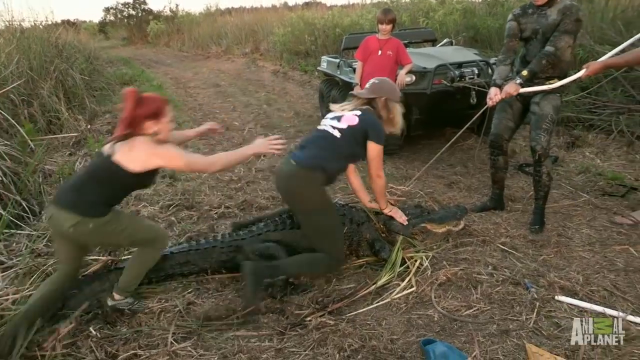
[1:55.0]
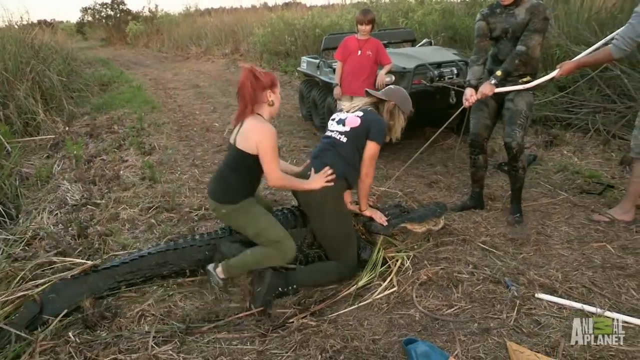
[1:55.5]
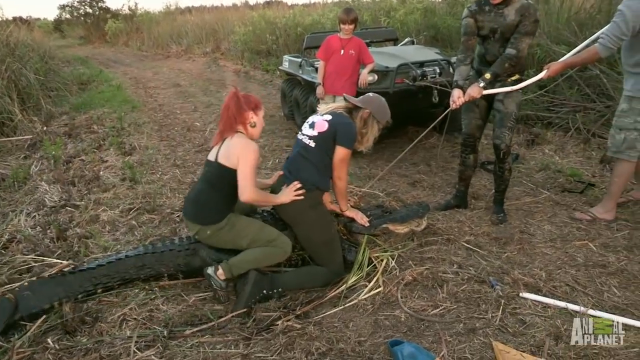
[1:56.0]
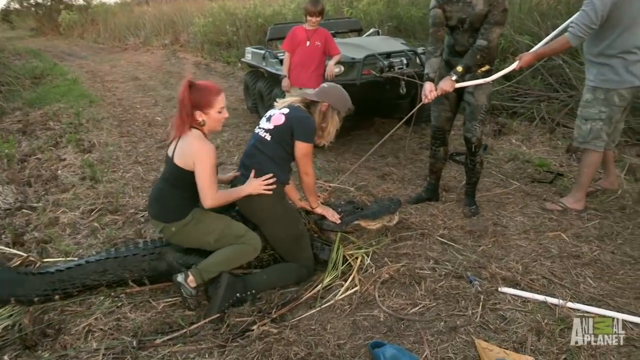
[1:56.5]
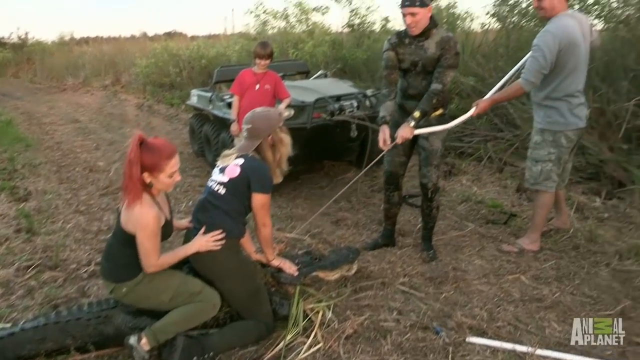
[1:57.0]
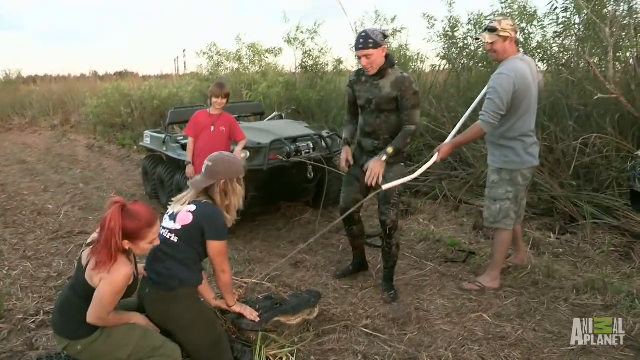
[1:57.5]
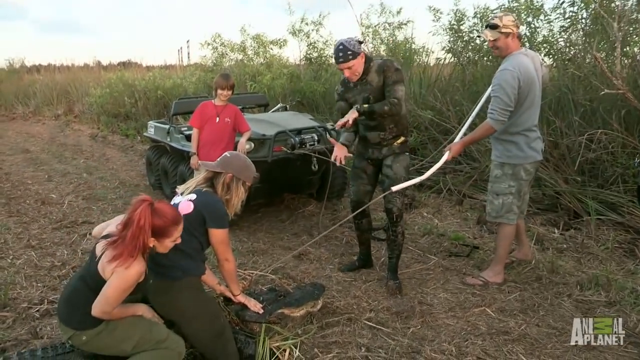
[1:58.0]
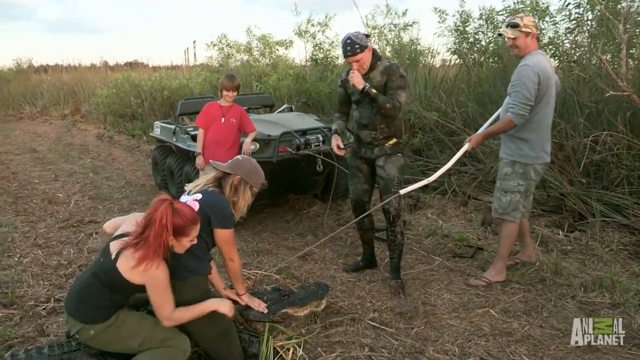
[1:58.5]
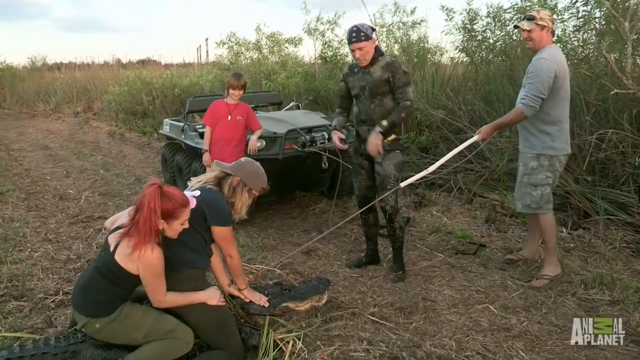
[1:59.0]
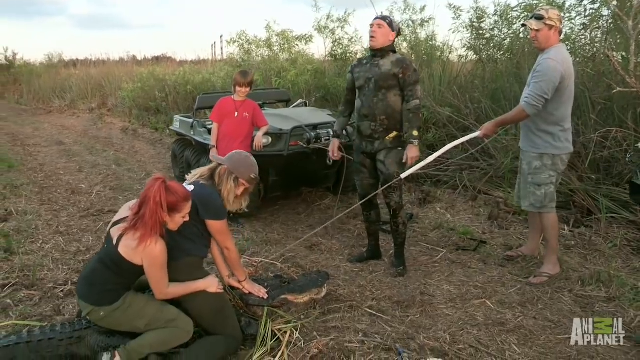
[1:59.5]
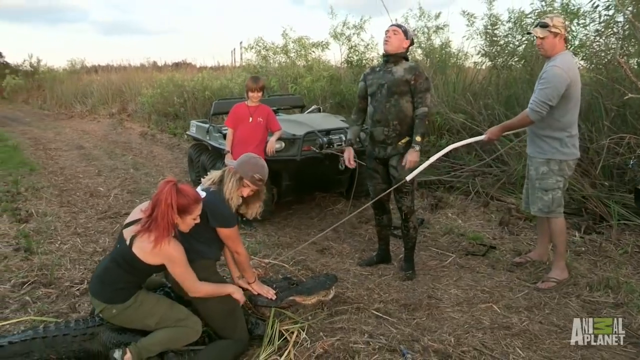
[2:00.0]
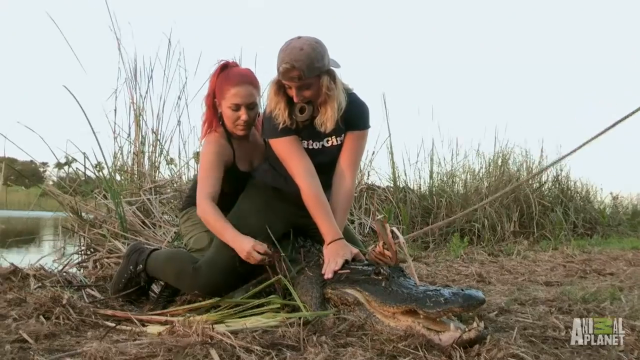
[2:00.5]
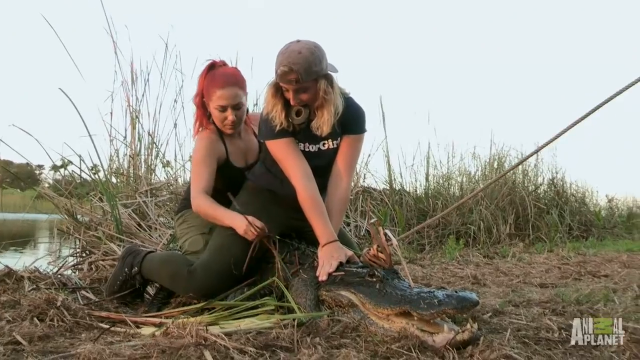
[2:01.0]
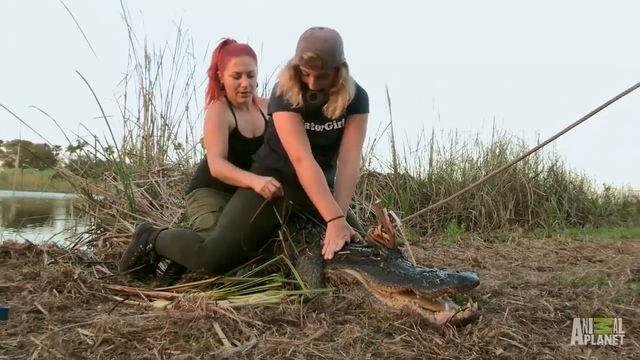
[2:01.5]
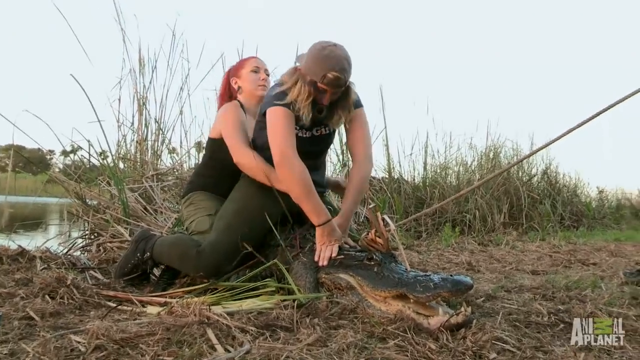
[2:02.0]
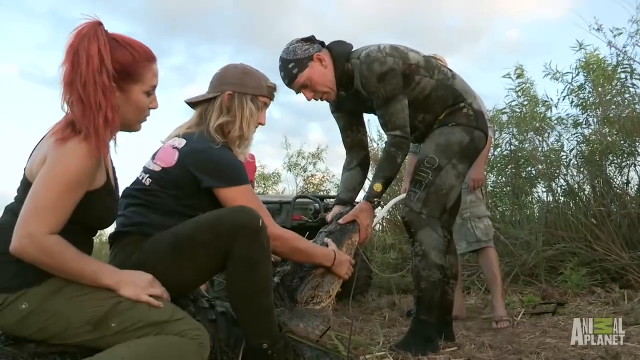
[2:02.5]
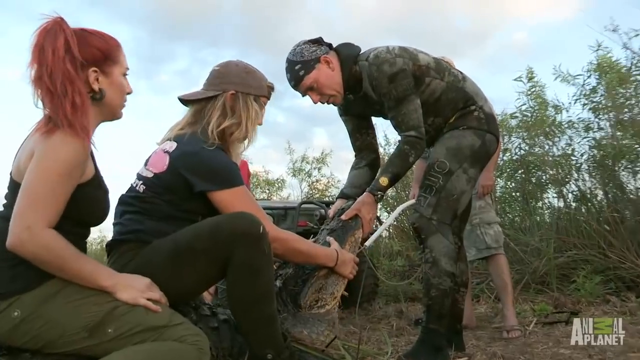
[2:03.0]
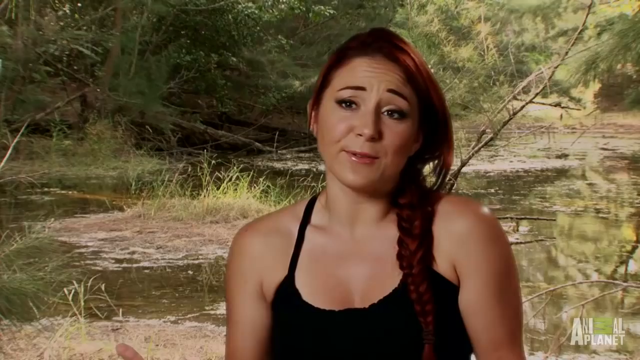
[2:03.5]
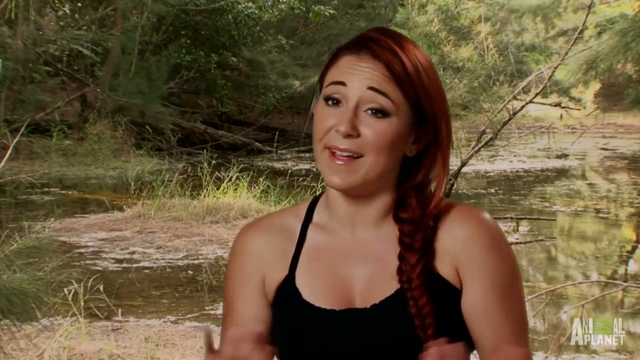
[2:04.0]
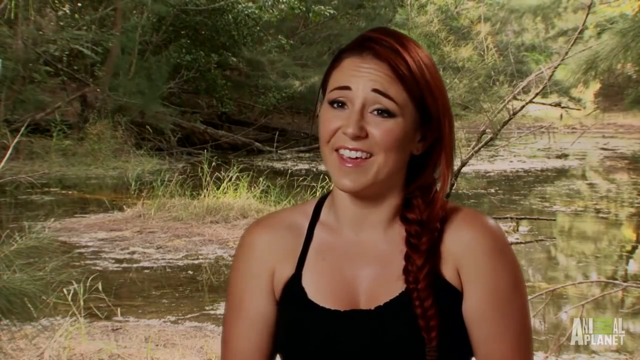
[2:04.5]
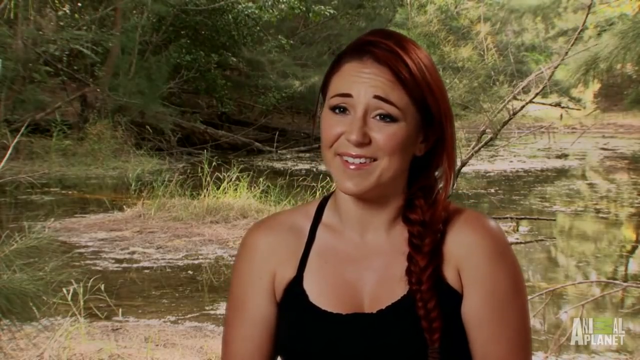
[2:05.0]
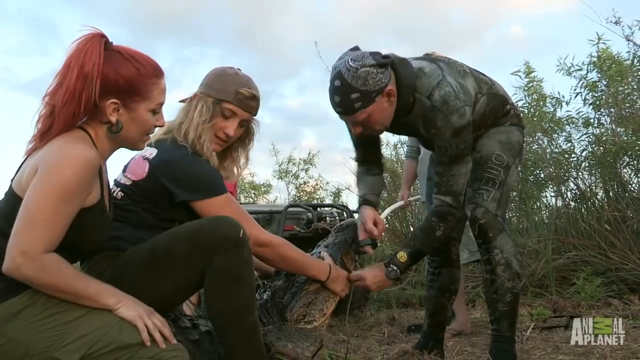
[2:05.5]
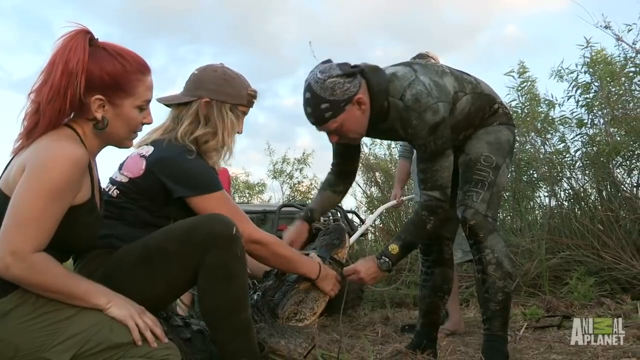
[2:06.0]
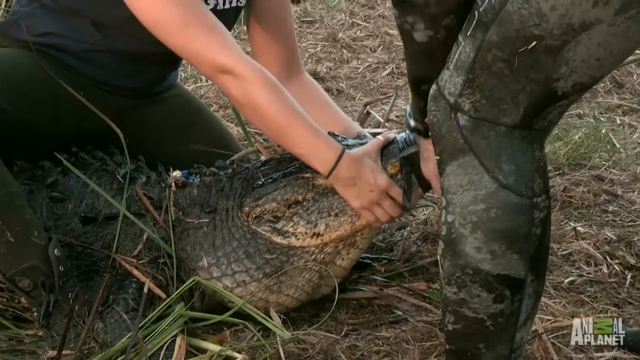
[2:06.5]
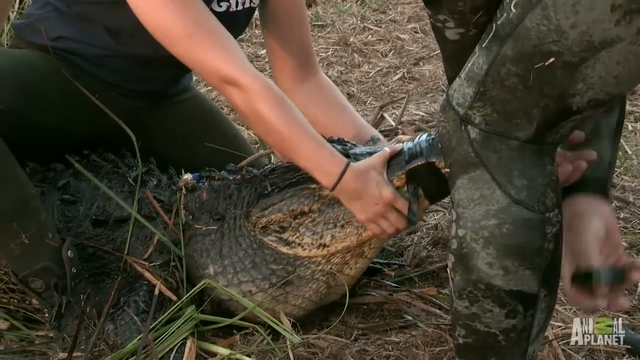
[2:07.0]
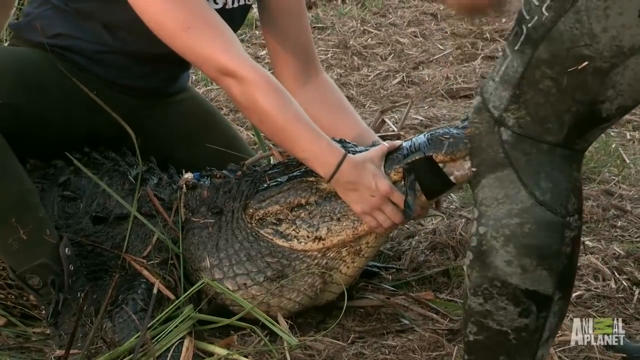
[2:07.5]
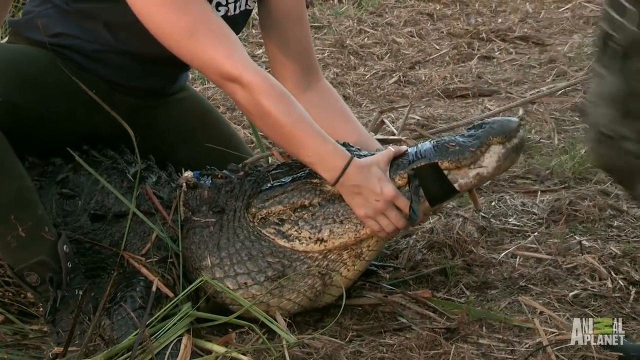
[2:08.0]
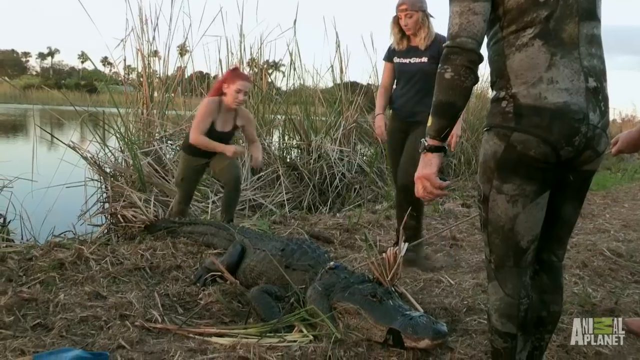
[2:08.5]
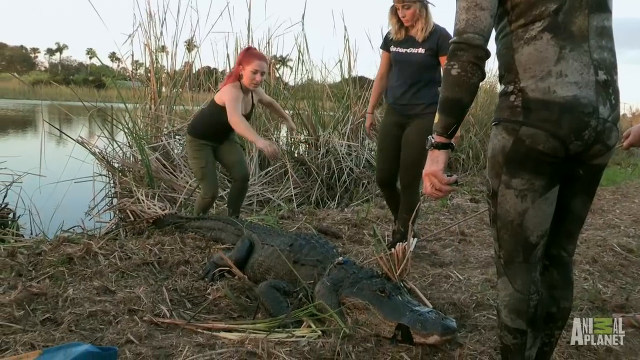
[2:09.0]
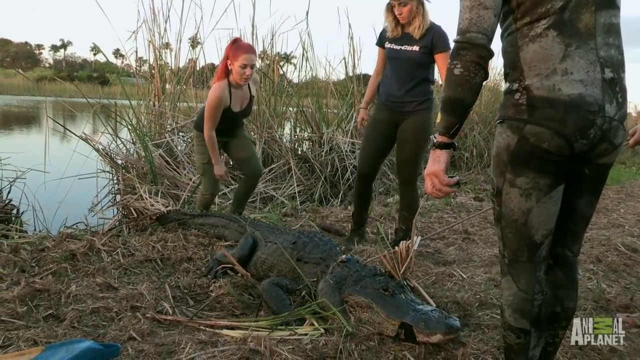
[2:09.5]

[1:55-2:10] The two women straddle the back of the large alligator, securing its body. The one in front wears a brown baseball cap backwards, a black t-shirt and olive-colored pants; behind her is the redheaded woman in the black tank top and olive pants. Meanwhile, the man in the gray shirt pulls at the rope, and the man wears a camel-colored wetsuit. The camera switches to a close-up of the two women sitting on the back of the alligator, then to the man in the wetsuit holding the alligator's jaws shut. The camera then shows what looks like the redheaded woman in a solo interview, smiling and talking to the camera. It switches back to the two women sitting on the alligator's back while the man apparently ties the alligator's mouth shut.